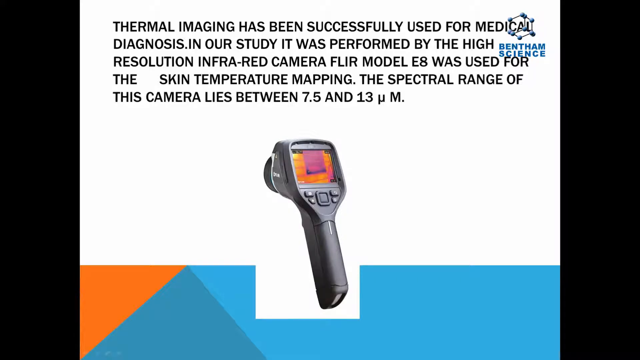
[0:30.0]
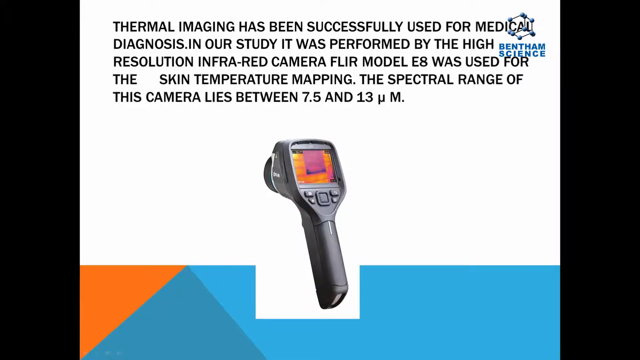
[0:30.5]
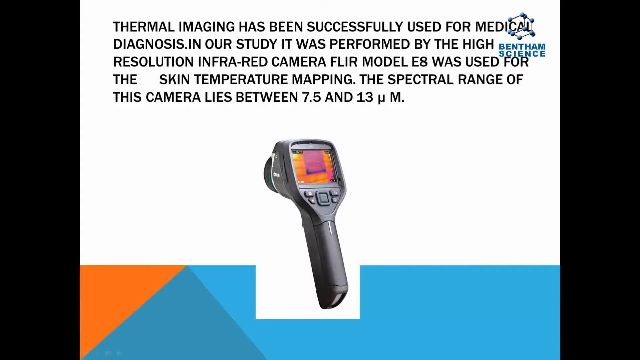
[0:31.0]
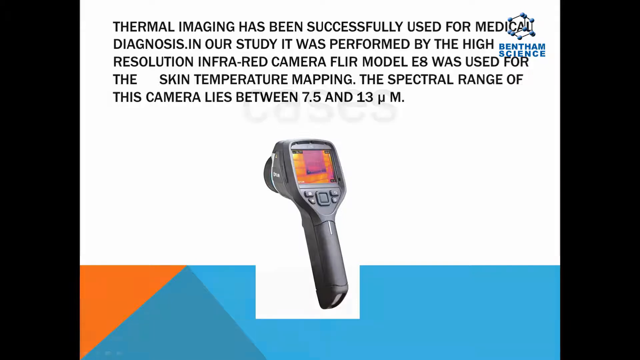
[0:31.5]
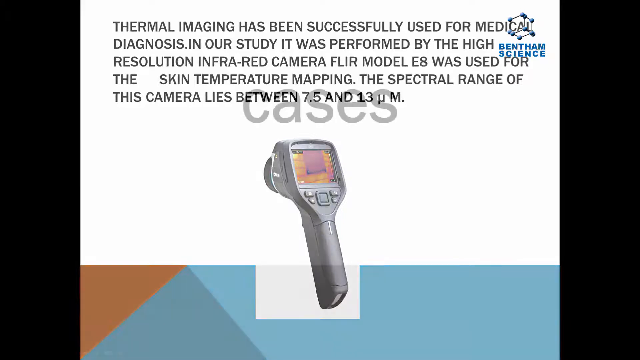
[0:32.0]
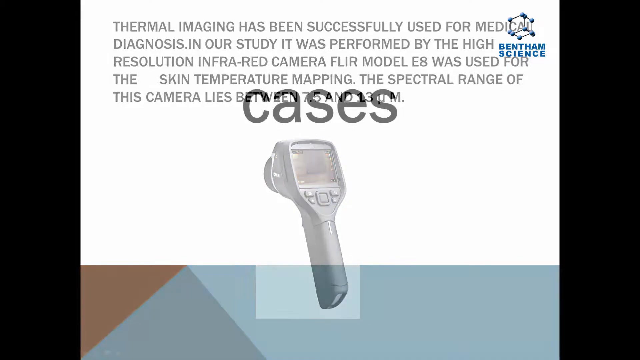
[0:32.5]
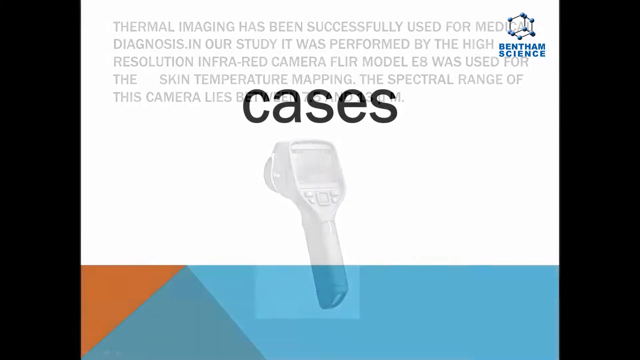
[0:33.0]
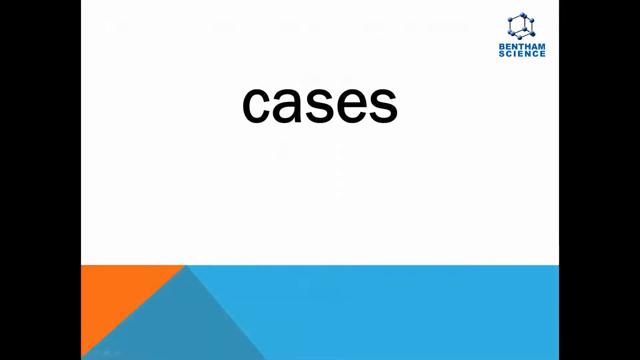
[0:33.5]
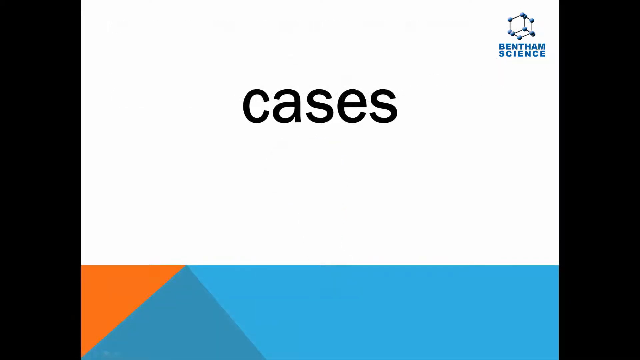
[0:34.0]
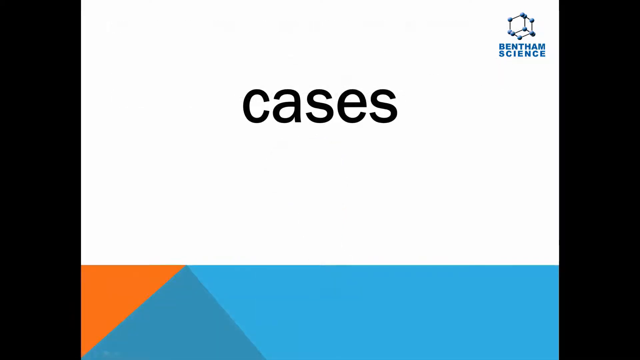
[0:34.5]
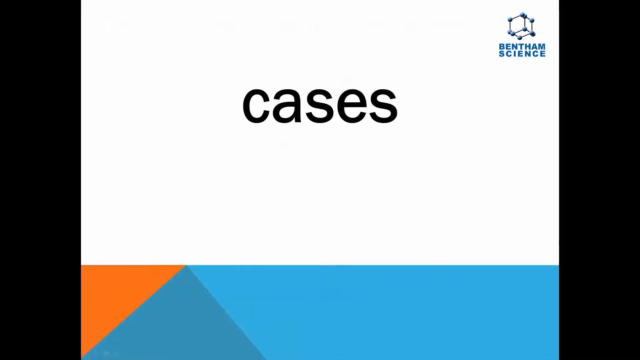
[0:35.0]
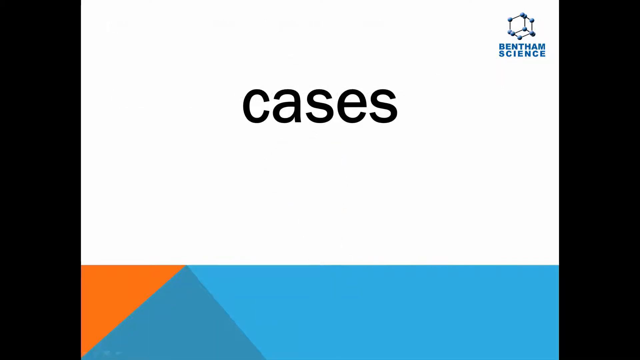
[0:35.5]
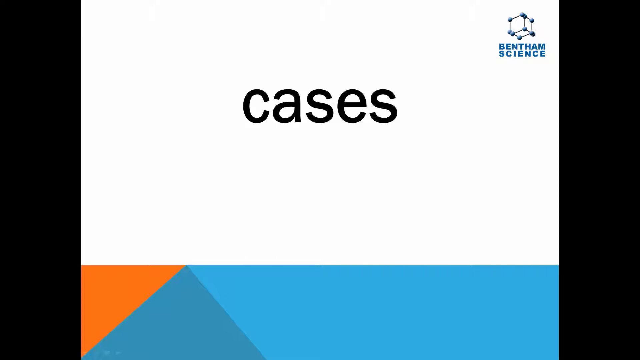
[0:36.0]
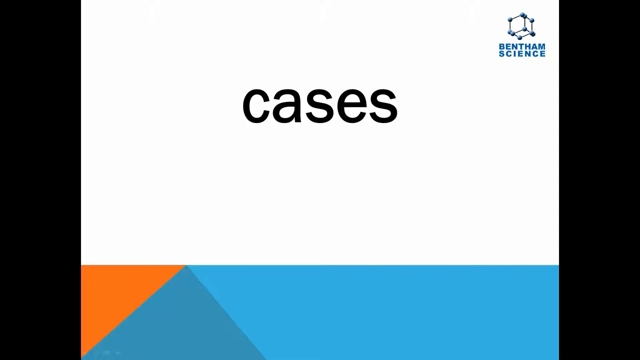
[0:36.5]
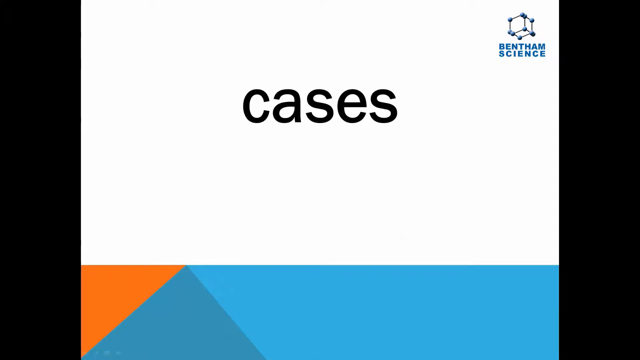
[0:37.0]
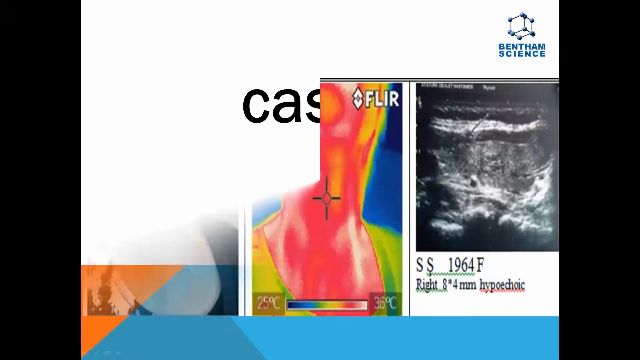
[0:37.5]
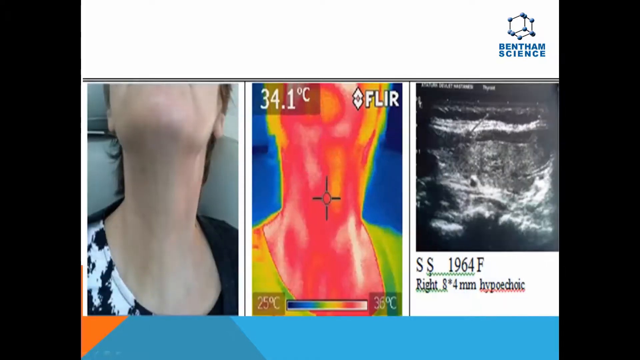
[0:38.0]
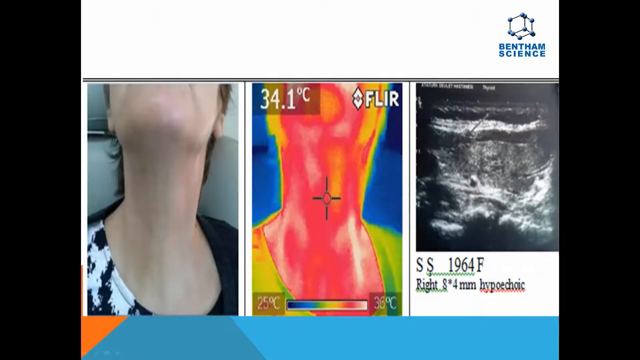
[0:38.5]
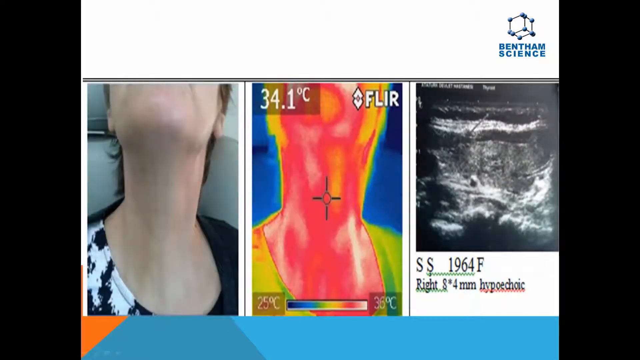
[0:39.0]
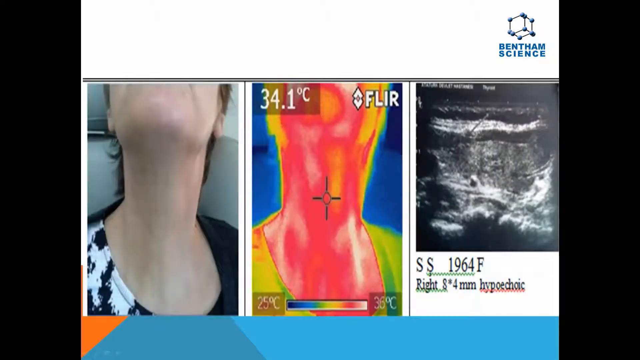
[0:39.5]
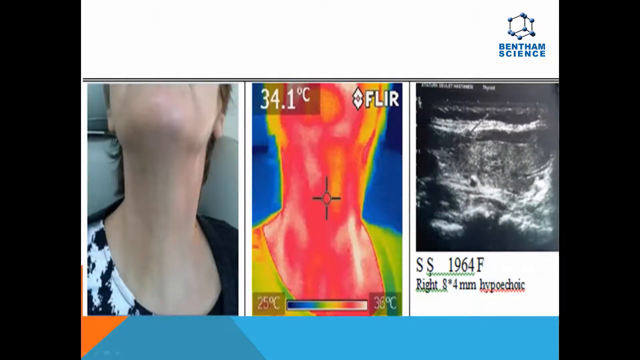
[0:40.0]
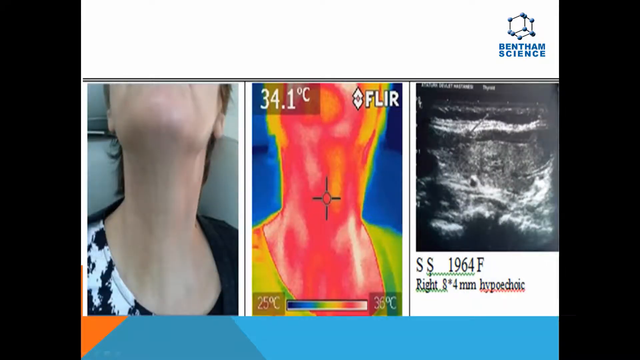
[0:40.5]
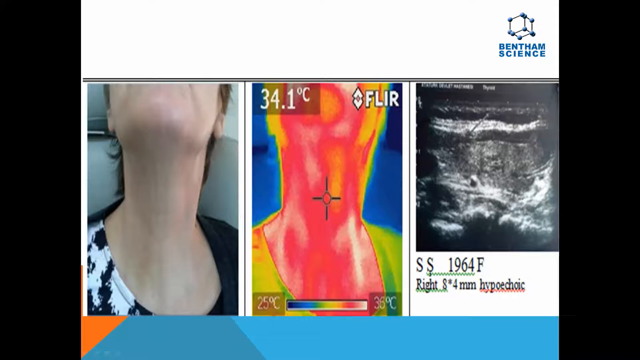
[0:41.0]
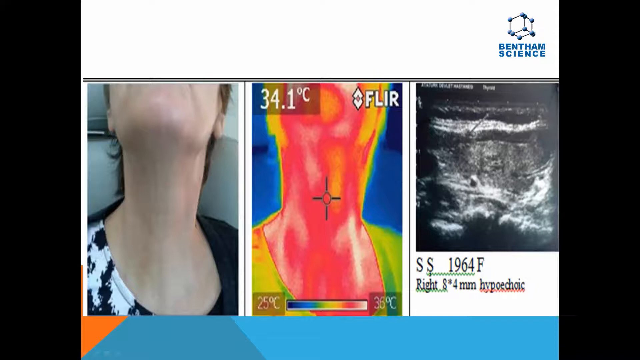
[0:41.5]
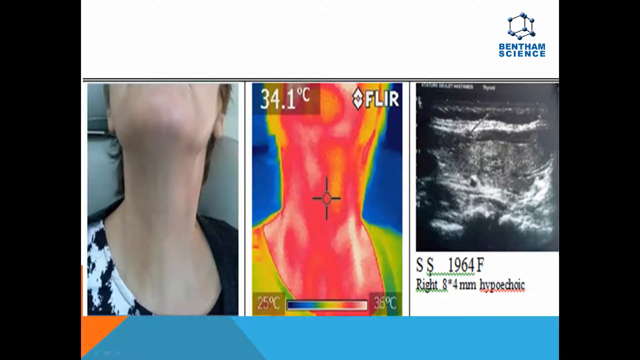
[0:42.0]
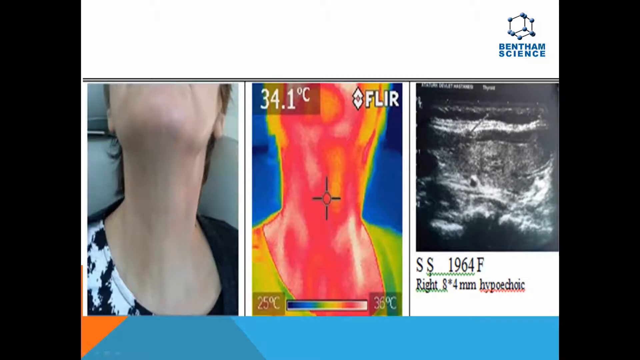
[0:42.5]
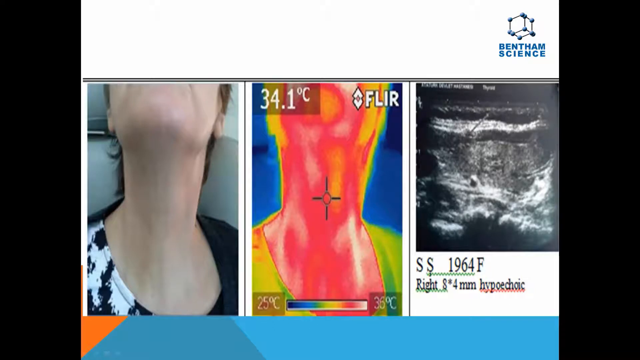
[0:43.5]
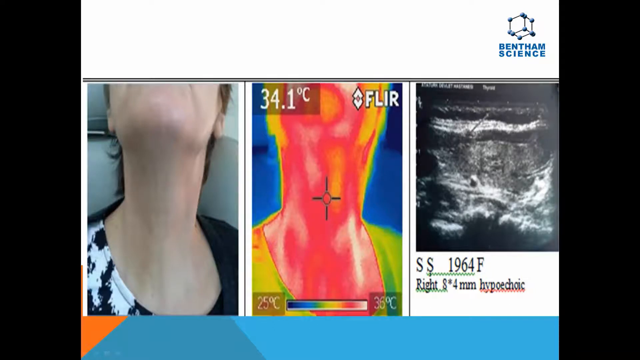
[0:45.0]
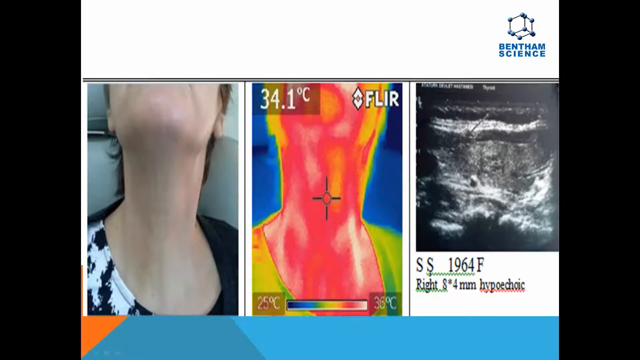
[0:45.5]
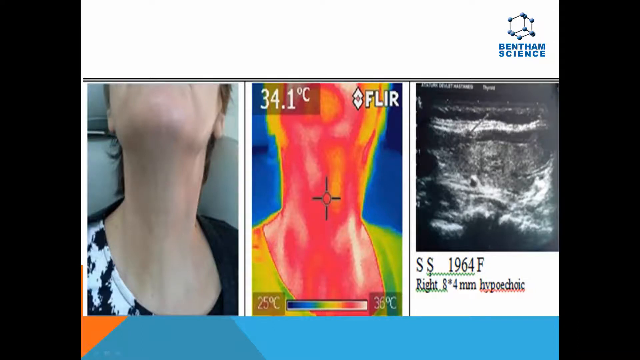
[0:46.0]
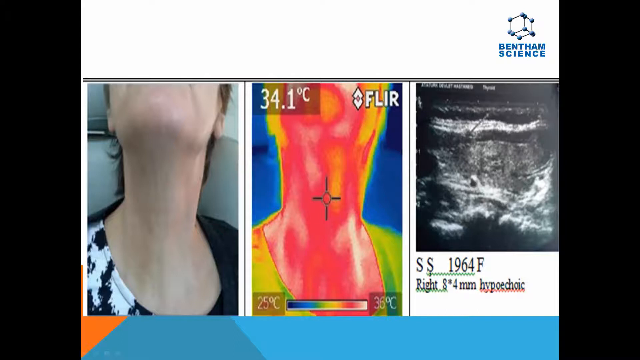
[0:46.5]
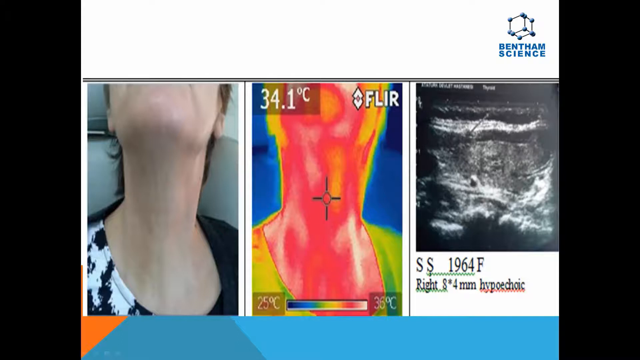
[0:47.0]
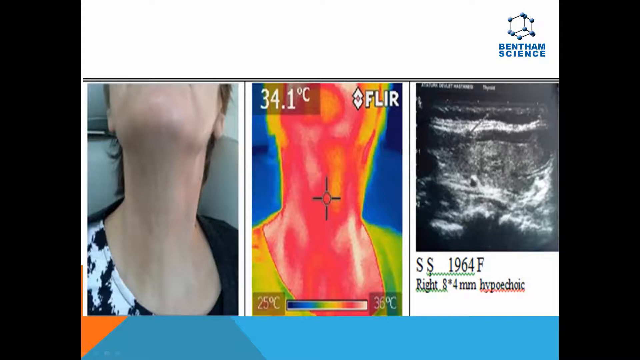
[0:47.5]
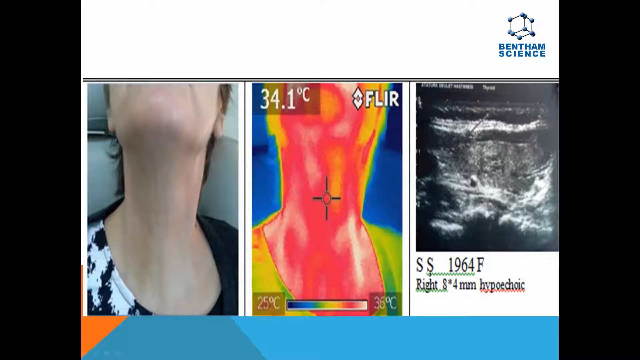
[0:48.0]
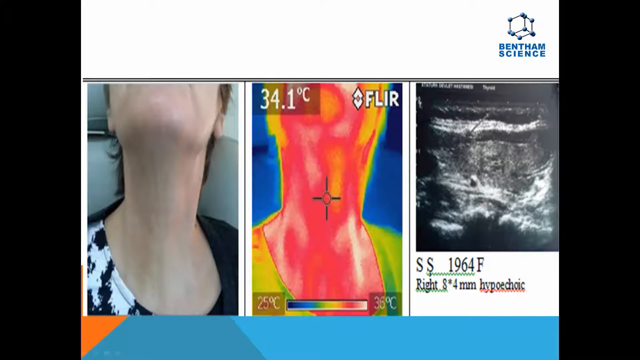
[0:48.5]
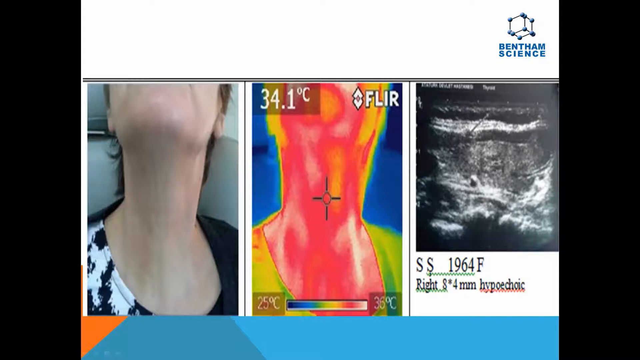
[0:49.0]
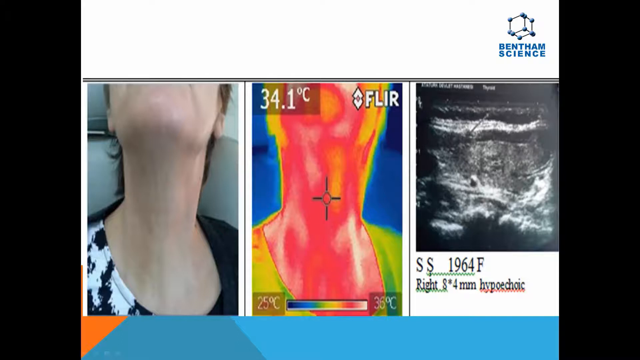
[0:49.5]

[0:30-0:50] A slide shows a black digital thermometer of the type pointed at someone's skin to check their temperature, with a large LCD on the back, on a white background. To the lower right is an aqua blue rectangle, and to the left is an orange, aqua blue and darker blue rectangle. Above the thermometer is a paragraph about thermal imaging having been successfully used for medical diagnosis. After a few seconds, the video transitions to a screen with a white background and the word "cases" in large black font. A long rectangle runs from the left to the right side along the bottom; most of it, on the right side, is aqua blue, near the left side there is a darker blue pyramid within the rectangle, and there is another triangle in orange. In the top right is a 3D cube above the words "Bentham Science". Next, a slide shows three pictures side by side. The left picture shows the top of a woman from her chin down to her upper chest; she sticks her chin up in the air so her neck is visible. She wears a black and white shirt, white with black spots on the left side and dark black on the right side. To the right is an infrared picture of the same woman, with a temperature of "34.1 C" in the top left and the word "FLIR" in the top right; her neck shows as bright red mixed with white, and the shirt is green and yellow. The picture on the right looks like something from a sonogram: grainy, black and white, and apparently of the same woman's neck. Below it is text including "SS 1964F" and a line ending in "hypoechoic". Below the pictures, a large rectangle runs from the left to the right side of the screen, mostly blue with a little orange on the left side.